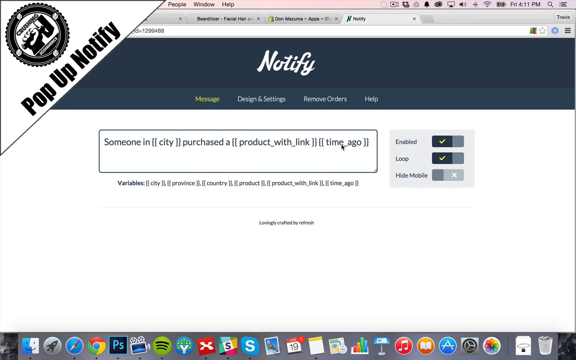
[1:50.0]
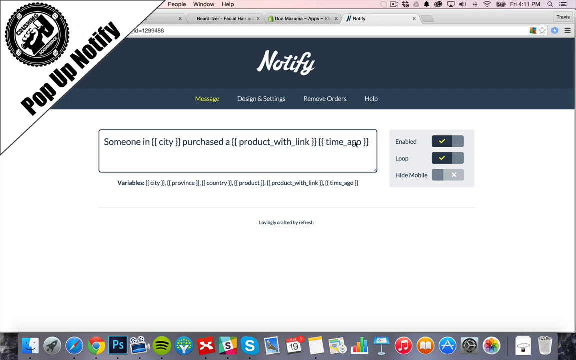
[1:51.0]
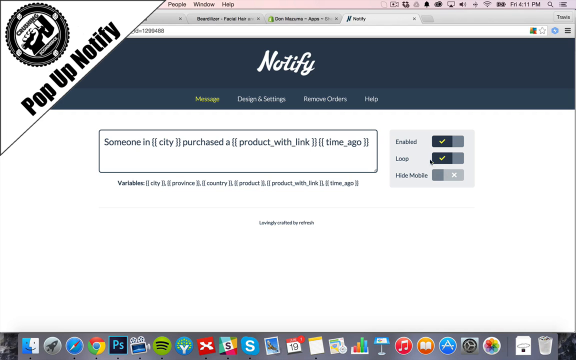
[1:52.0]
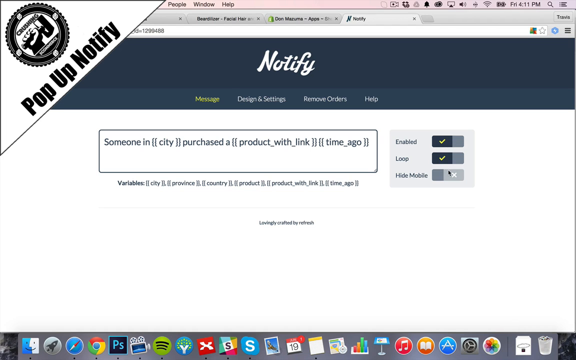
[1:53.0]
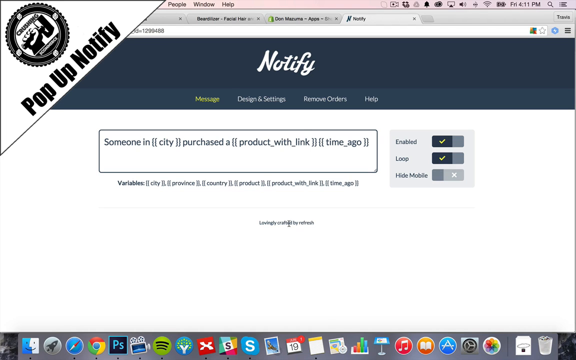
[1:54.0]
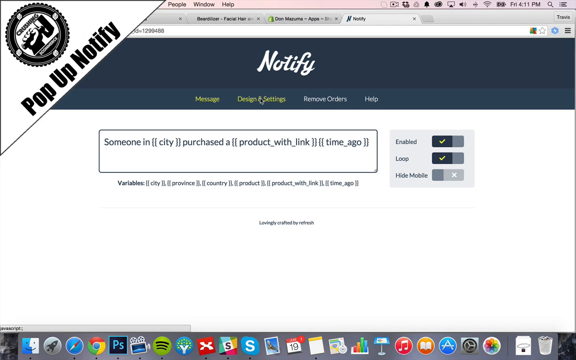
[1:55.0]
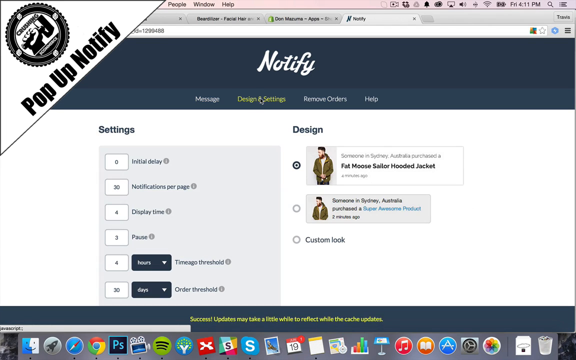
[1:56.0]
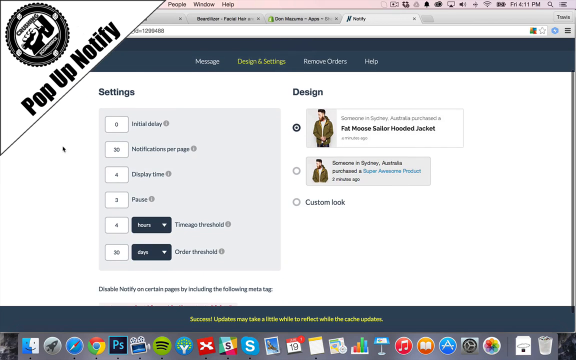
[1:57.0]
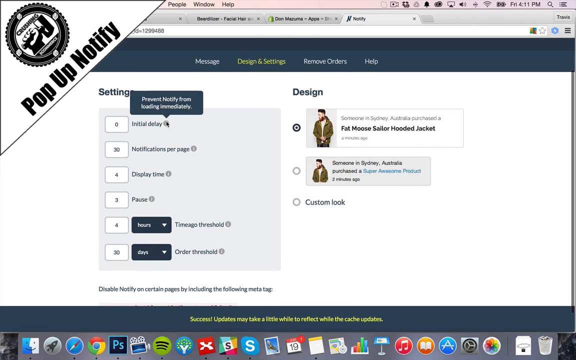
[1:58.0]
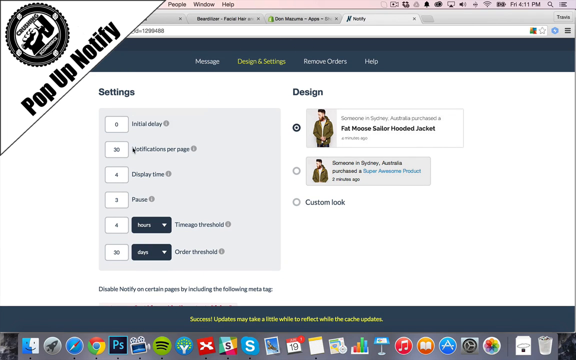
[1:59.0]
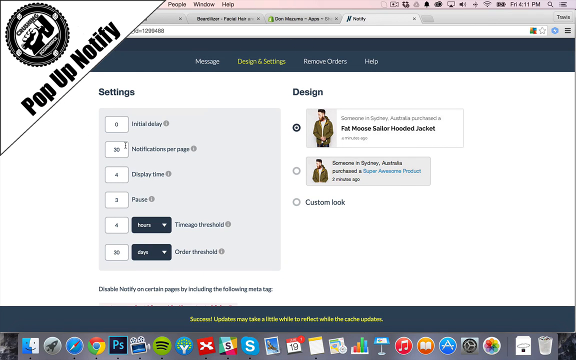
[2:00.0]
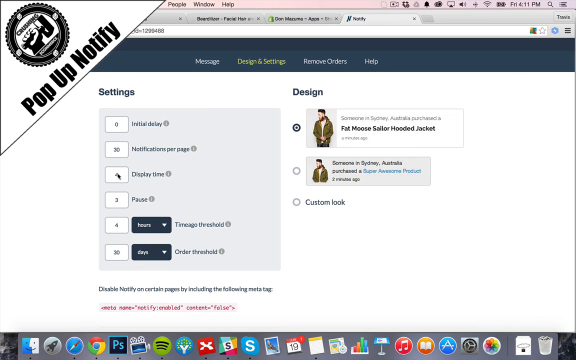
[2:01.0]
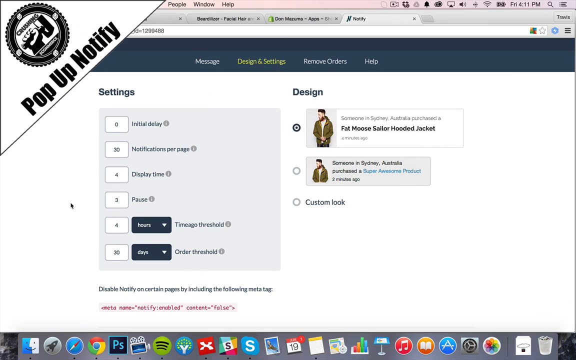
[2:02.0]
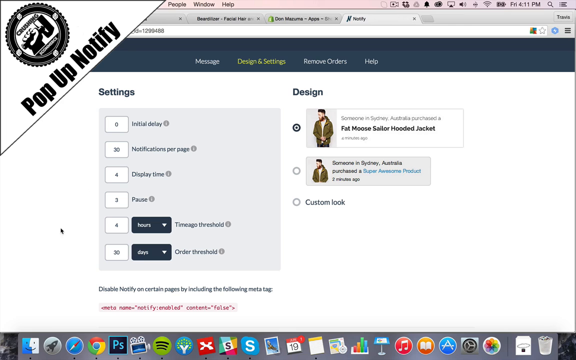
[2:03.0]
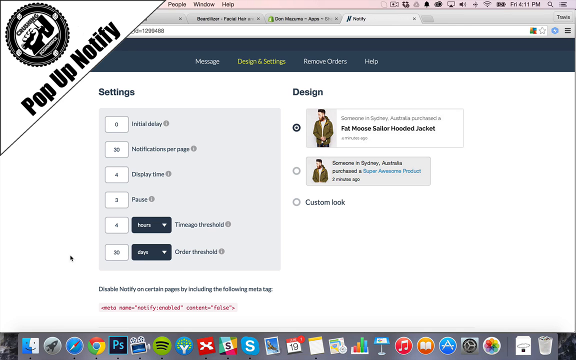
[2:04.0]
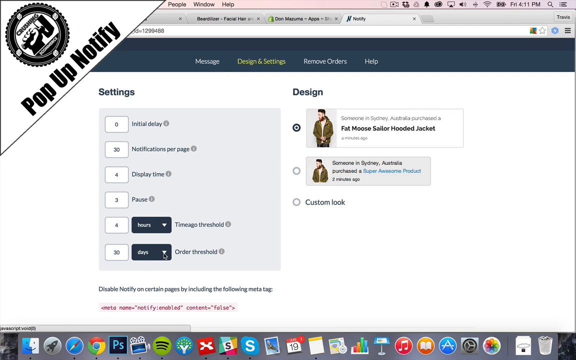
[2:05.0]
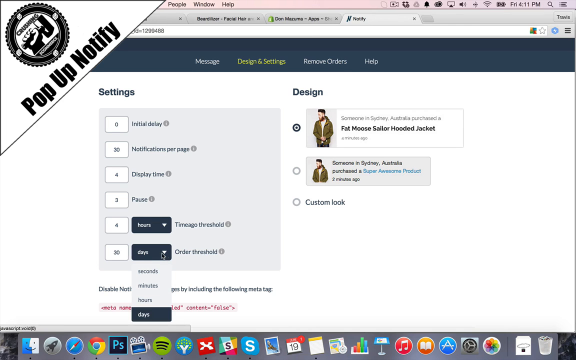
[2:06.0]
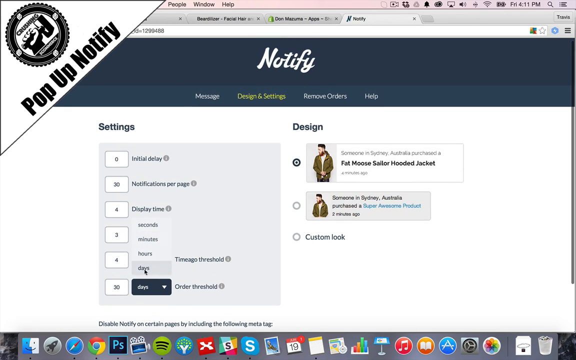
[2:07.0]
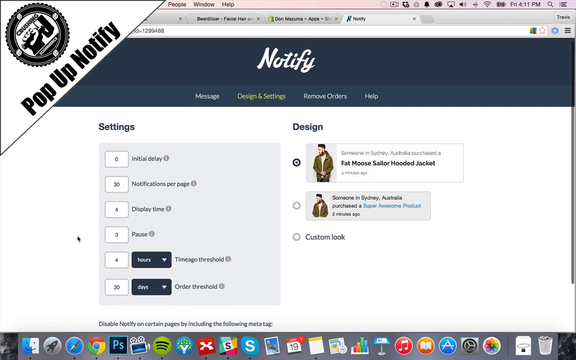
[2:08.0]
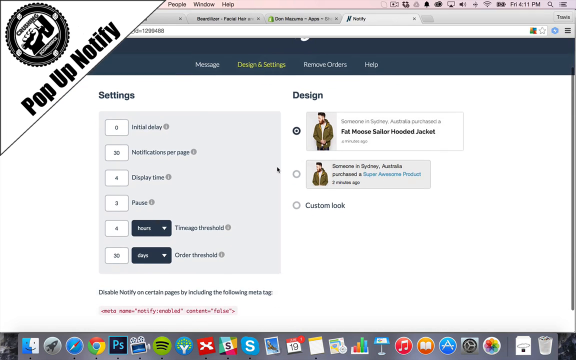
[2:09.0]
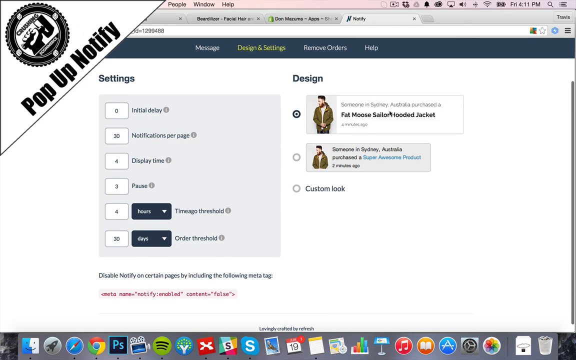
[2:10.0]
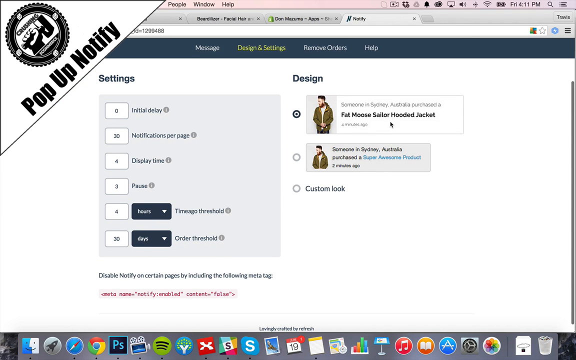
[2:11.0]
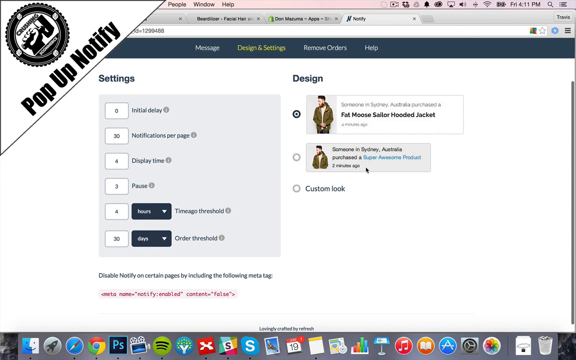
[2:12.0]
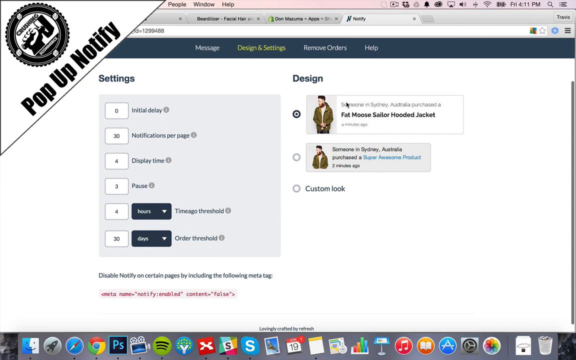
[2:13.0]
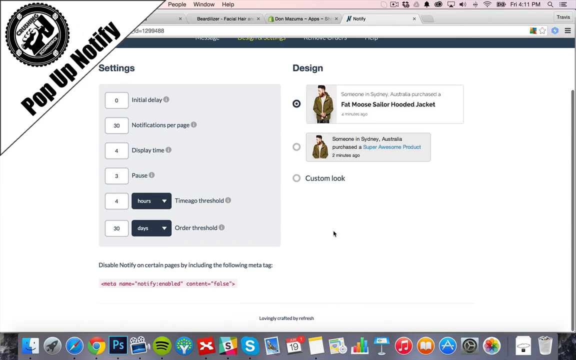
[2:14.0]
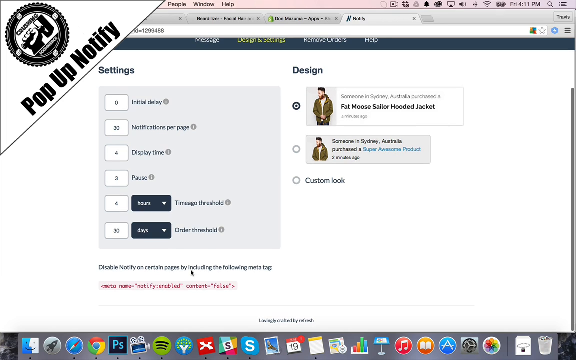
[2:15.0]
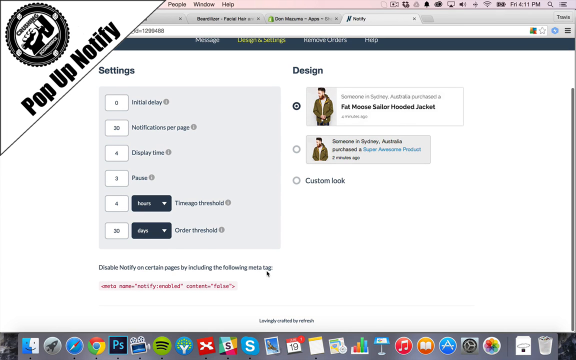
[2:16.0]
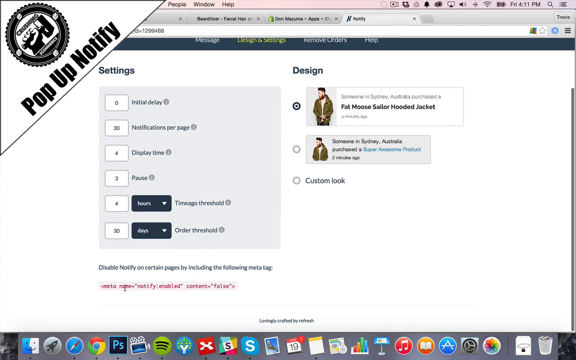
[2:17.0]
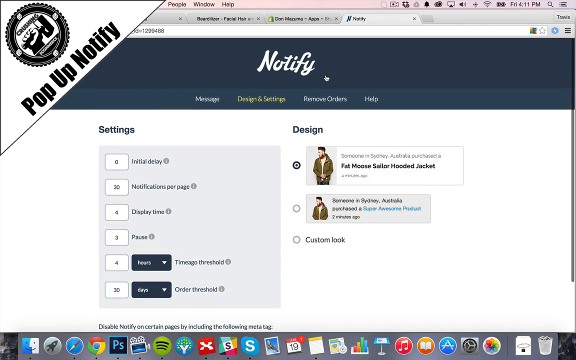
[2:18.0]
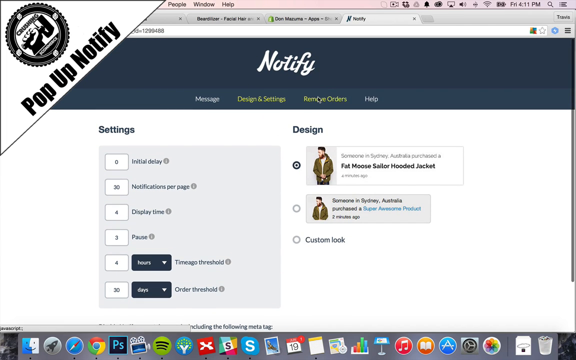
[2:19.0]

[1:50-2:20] Notify is open, with "notify" in white and tabs underneath. One tab possibly reads "manage your message", though it is hard to tell; the person is in that section. Other tabs read "Design & settings", "Remove orders" and "Help now". An example notification reads "Someone in (city) purchased a (product)" followed by "(time ago)". The mouse hovers over it, and it shows as enabled. A settings section lists "initial delay", "notification per page", "display time", "pause", "hours" and "days". On the right side, under "design", the pop-up is shown.